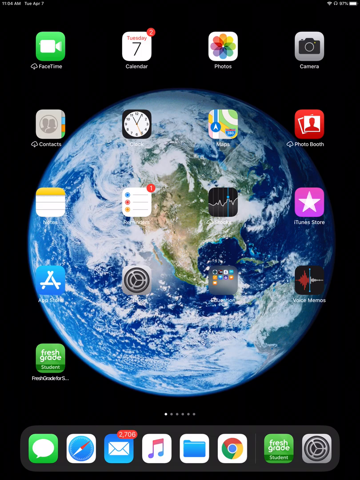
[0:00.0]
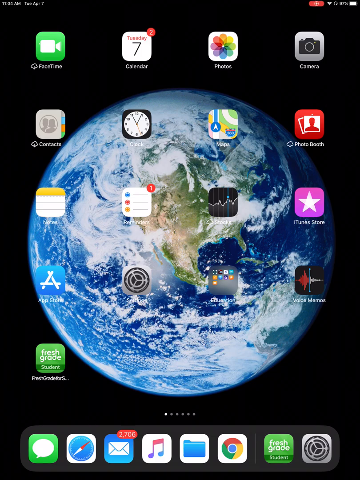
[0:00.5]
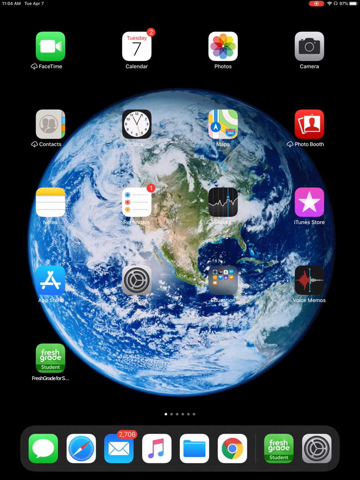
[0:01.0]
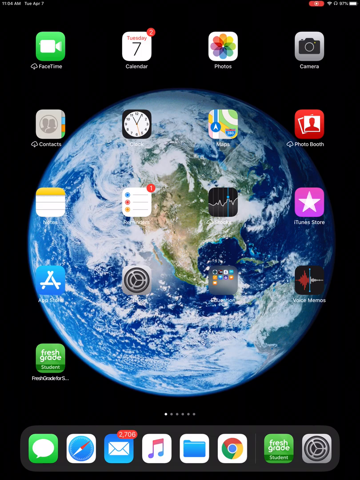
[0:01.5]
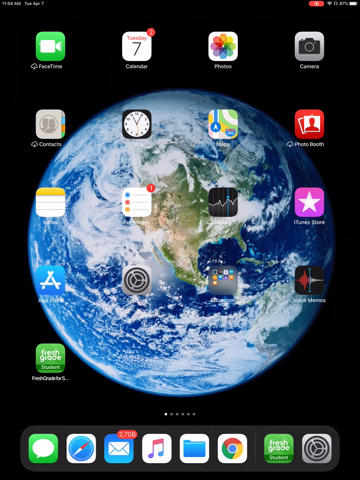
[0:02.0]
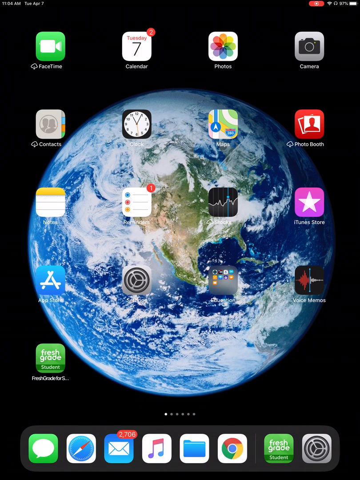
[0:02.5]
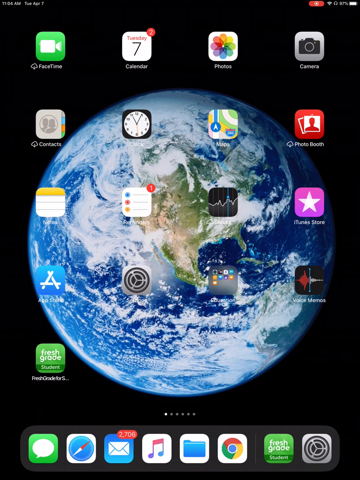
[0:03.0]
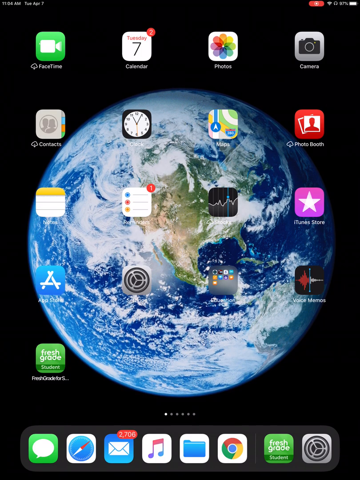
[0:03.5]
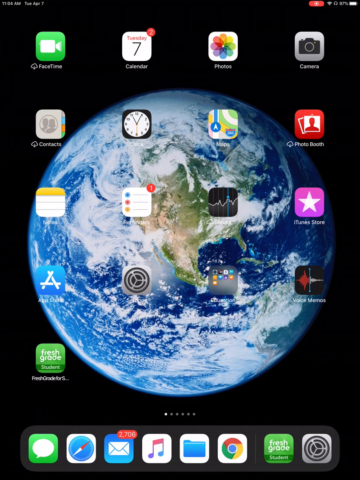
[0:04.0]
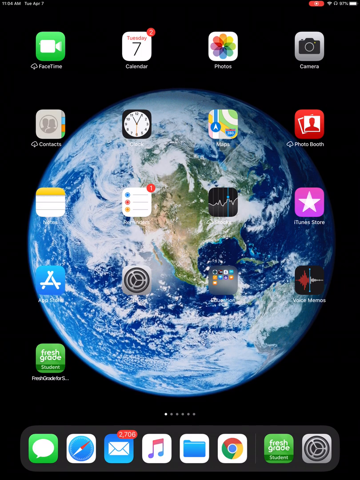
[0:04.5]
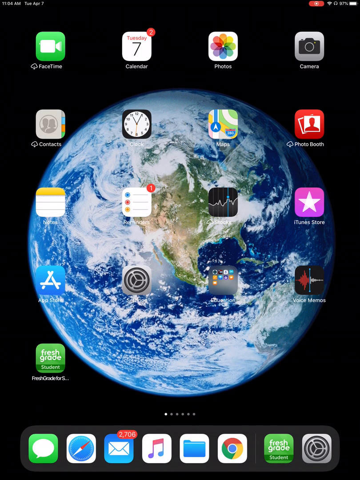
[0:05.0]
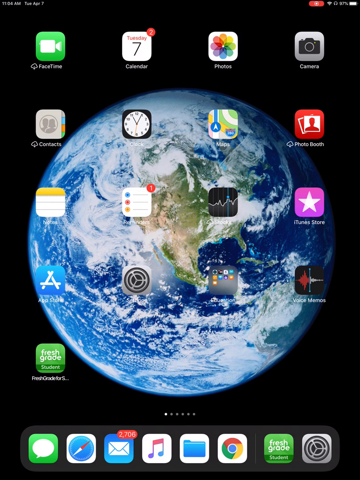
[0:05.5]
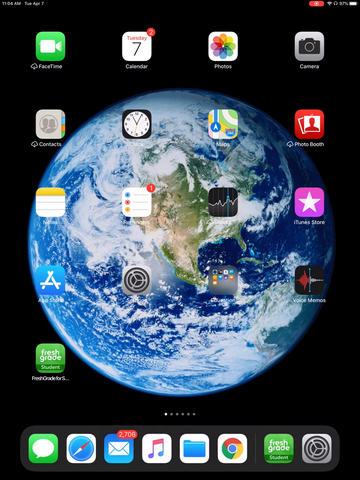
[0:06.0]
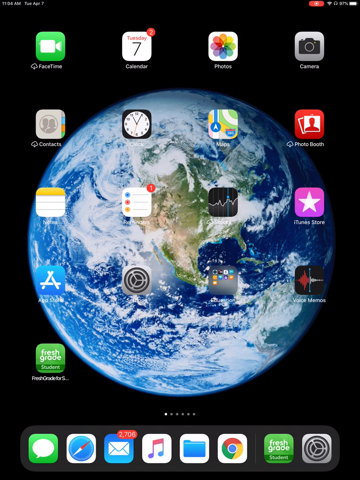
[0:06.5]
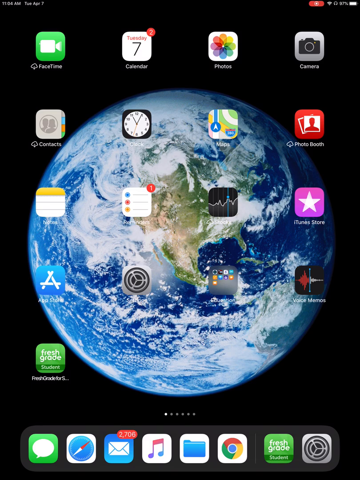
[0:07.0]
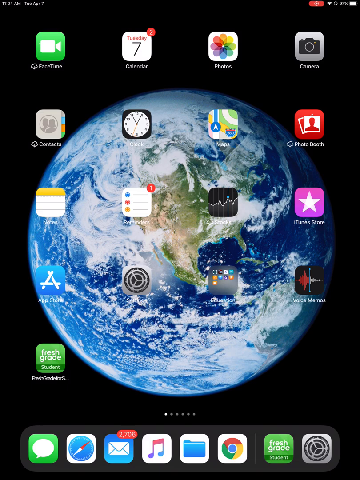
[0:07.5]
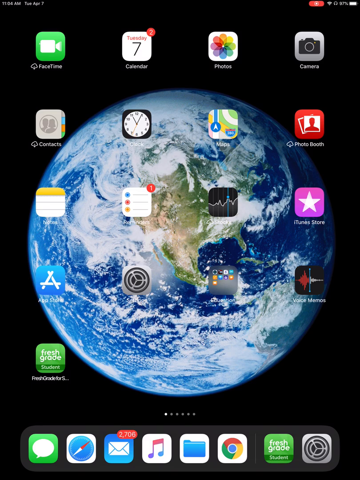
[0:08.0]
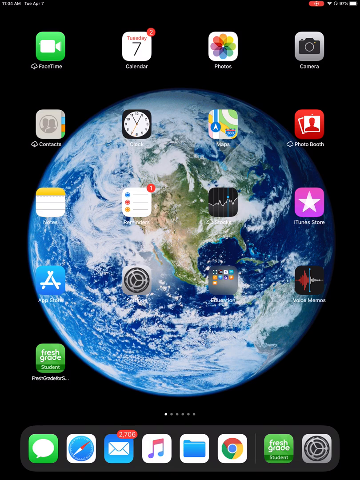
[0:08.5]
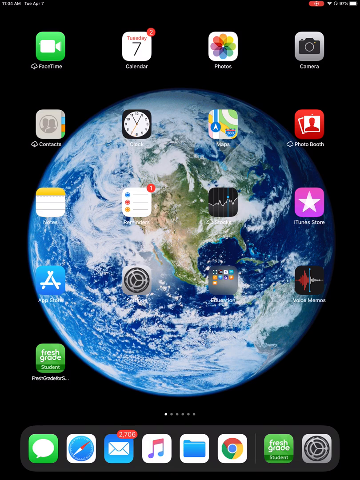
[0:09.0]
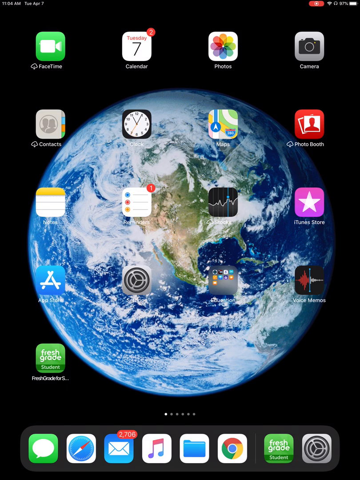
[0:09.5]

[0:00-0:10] The home screen of an iPad is shown, with a background of the earth in the middle of the screen against black. Eight icons are on the bottom bar: the text messaging app, Safari, the mail app, Apple Music, folders, Google Chrome, FreshGrade, and the Settings app. Seventeen applications fill the home screen in front of the globe background, and one of them is a folder containing nine apps. The iPad has six pages, and the first page is currently displayed. The video stays on this exact page for the whole shot.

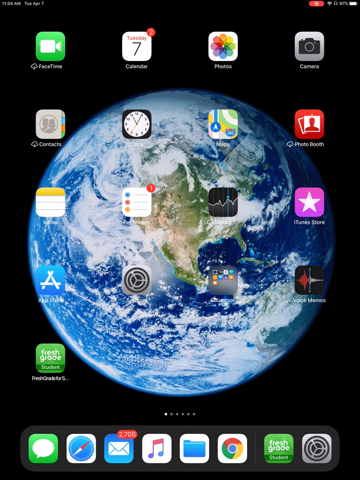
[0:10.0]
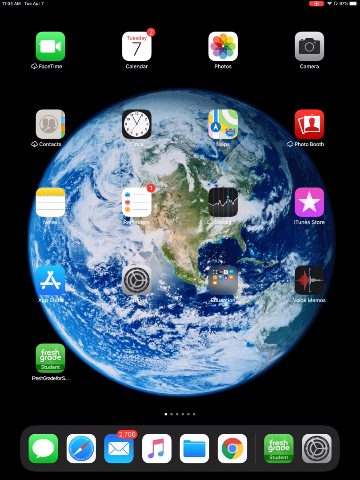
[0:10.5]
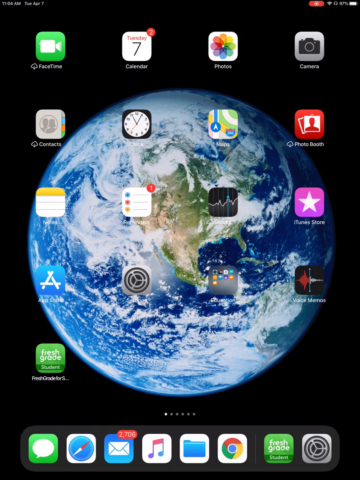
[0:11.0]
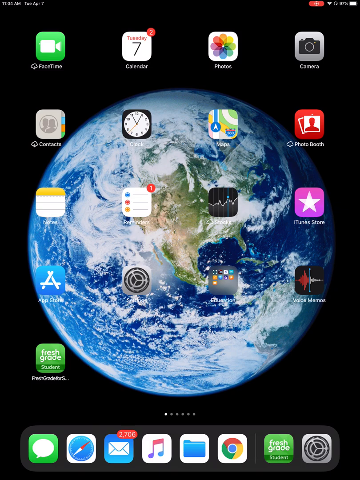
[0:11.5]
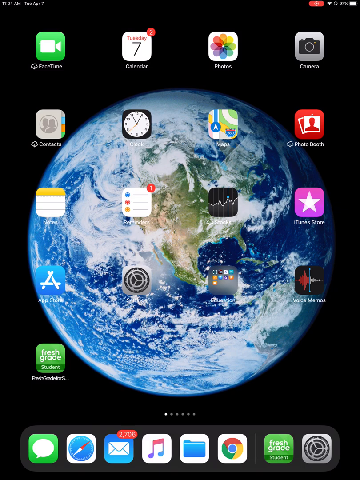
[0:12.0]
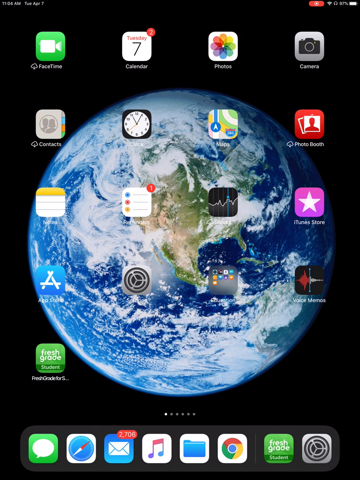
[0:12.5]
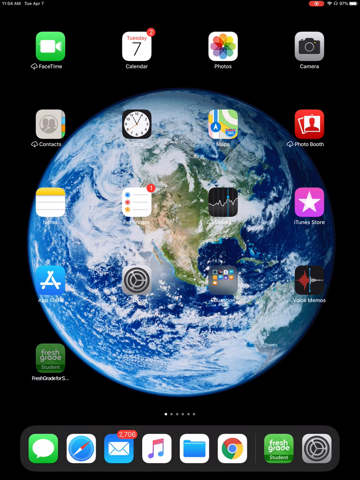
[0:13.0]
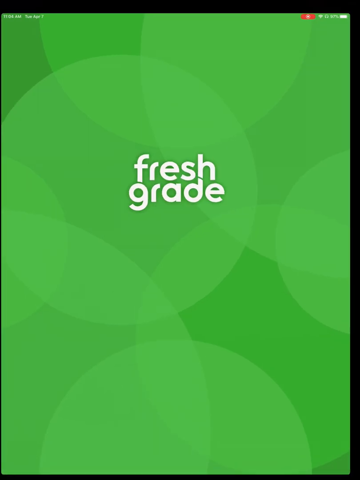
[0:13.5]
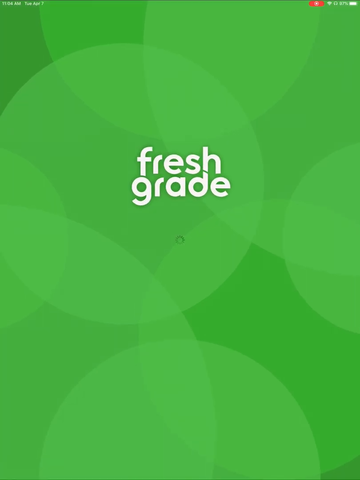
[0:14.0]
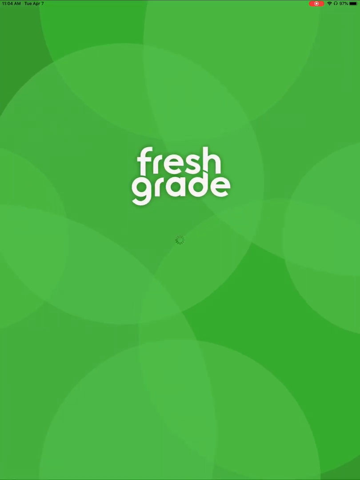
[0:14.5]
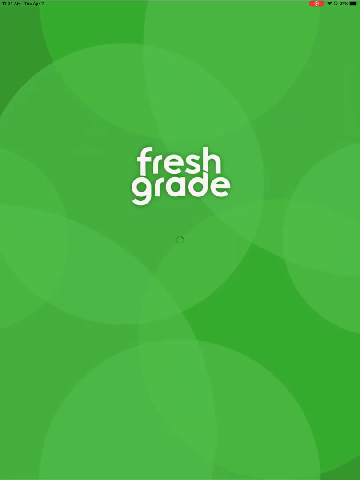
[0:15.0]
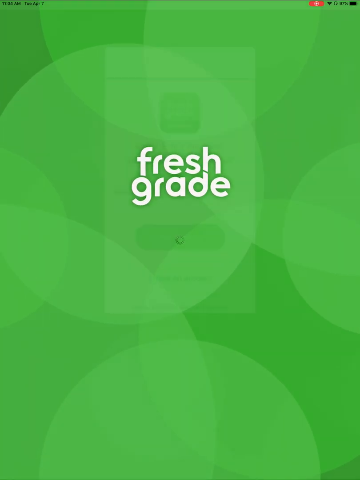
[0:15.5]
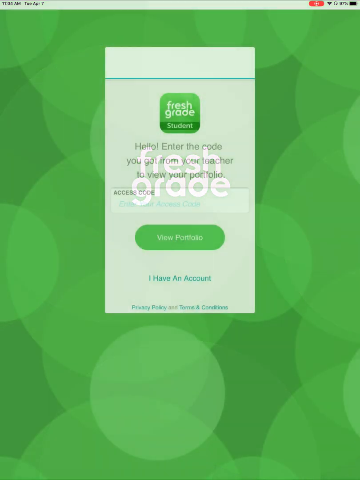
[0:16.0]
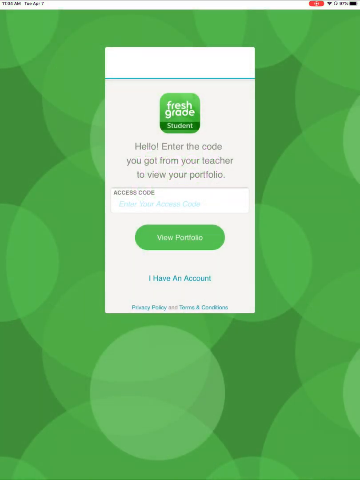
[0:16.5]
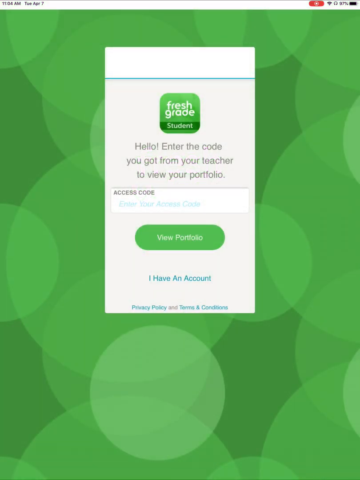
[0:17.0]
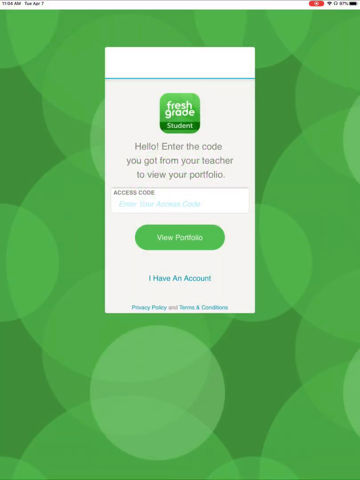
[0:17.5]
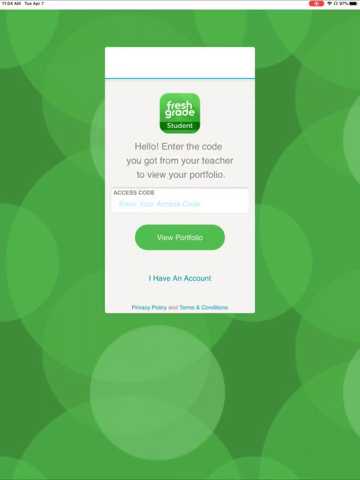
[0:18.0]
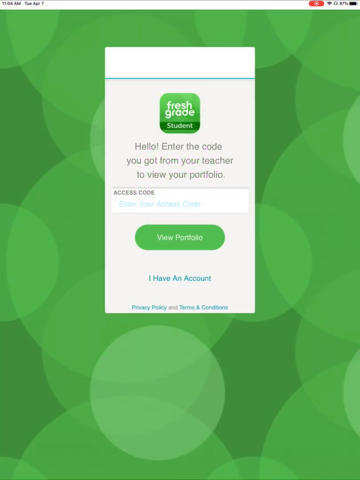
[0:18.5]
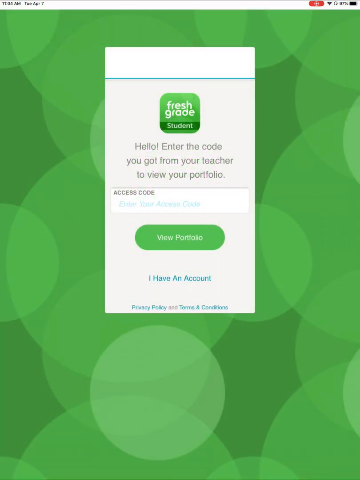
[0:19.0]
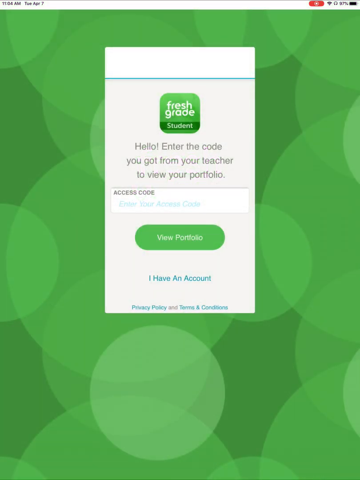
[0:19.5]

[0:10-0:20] The same home screen is shown until the FreshGrade app is opened. As the app loads, the background is green with circles in different shades of green behind the FreshGrade logo in the center. A small loading icon appears before a prompt pops up in front of the screen that says "hello enter the code you got from the" and "be sure to view your portfolio", with an area to add an access code and a button below that says "view portfolio". There is also an option that says "I have an account" and a privacy policy below.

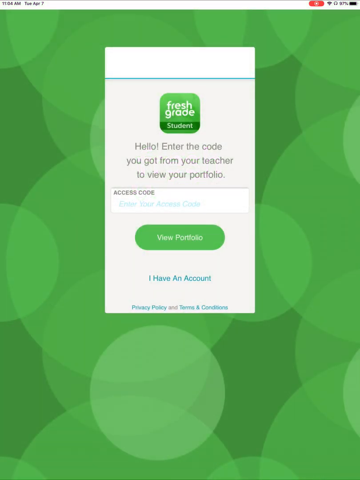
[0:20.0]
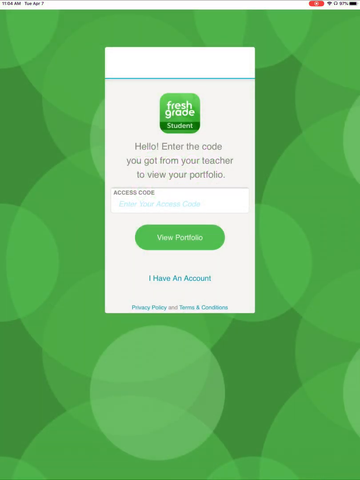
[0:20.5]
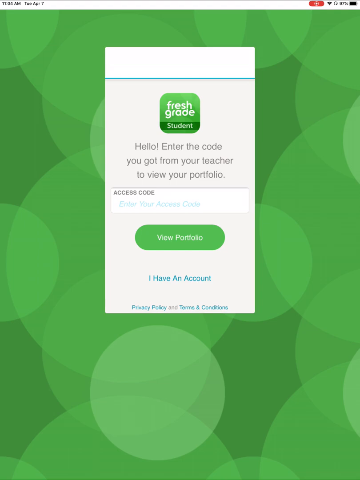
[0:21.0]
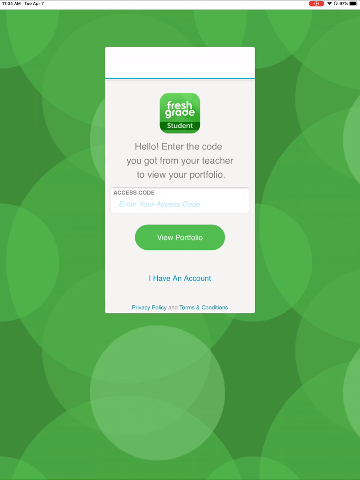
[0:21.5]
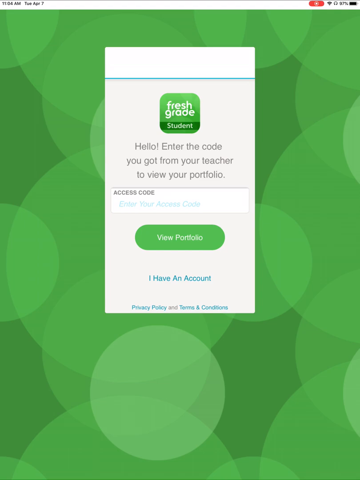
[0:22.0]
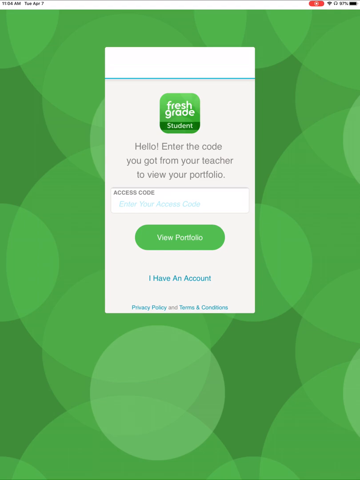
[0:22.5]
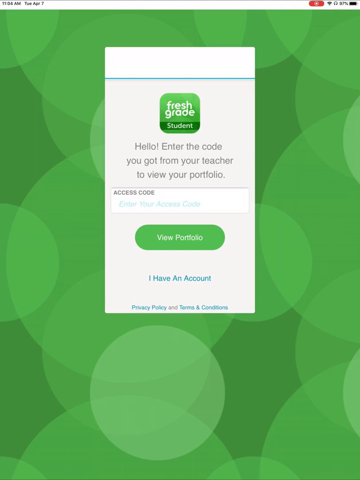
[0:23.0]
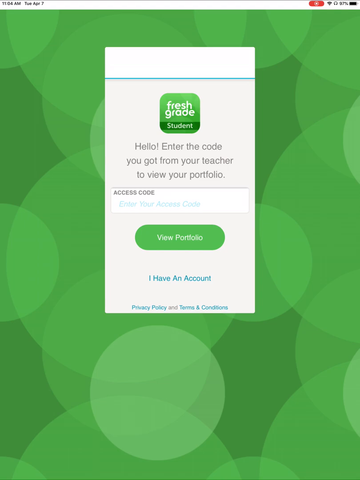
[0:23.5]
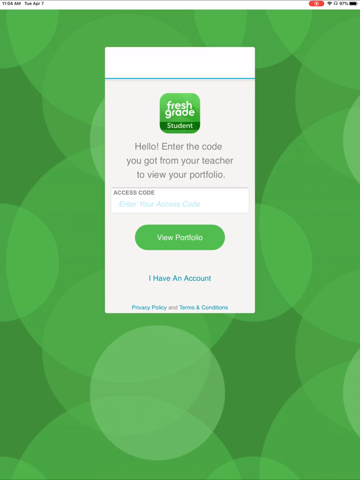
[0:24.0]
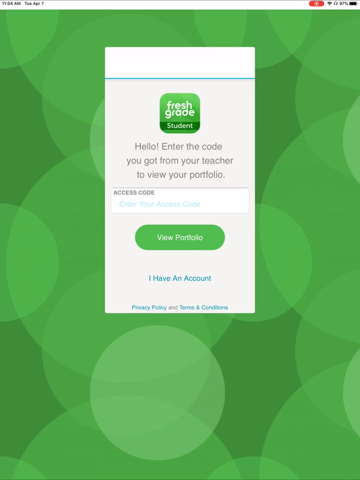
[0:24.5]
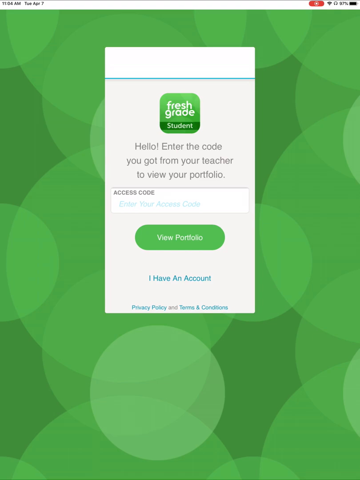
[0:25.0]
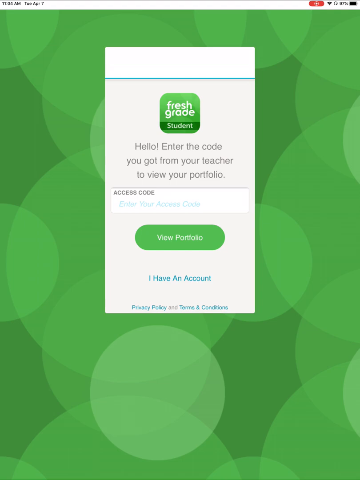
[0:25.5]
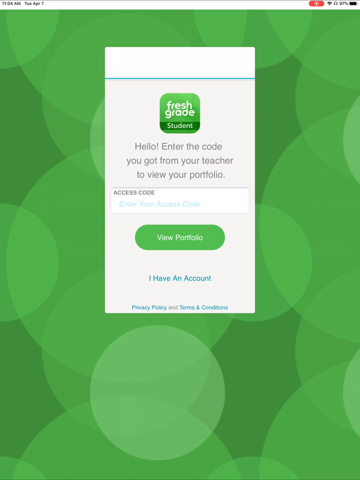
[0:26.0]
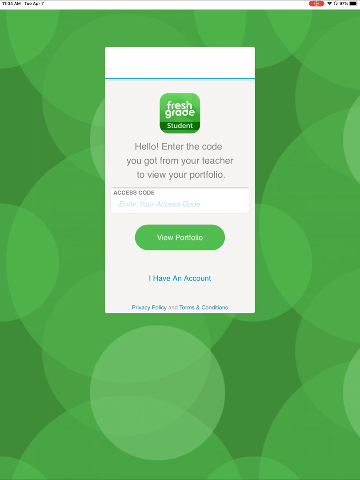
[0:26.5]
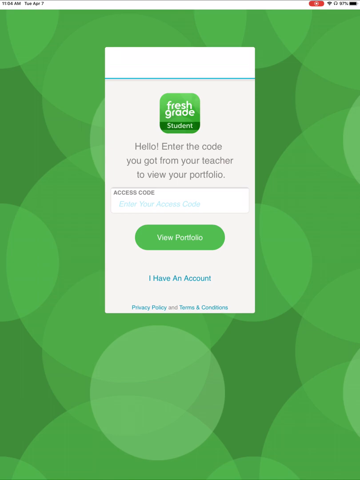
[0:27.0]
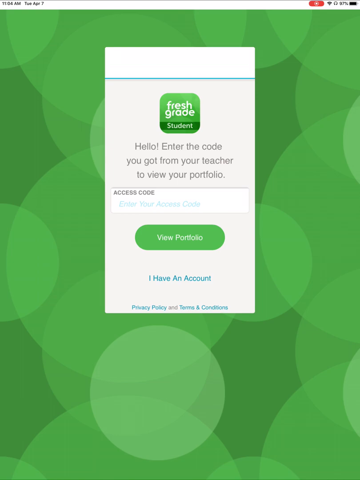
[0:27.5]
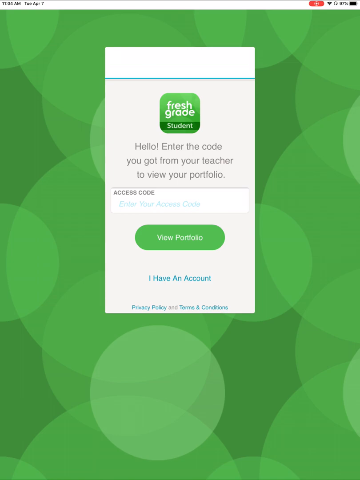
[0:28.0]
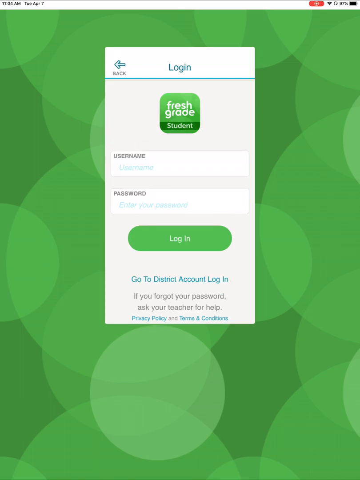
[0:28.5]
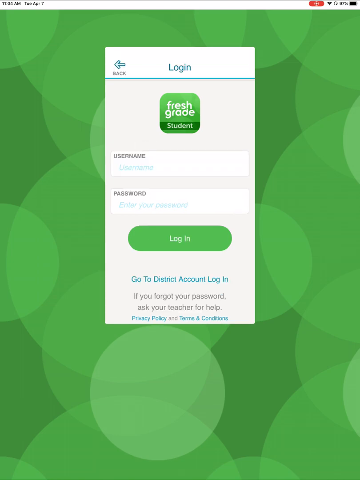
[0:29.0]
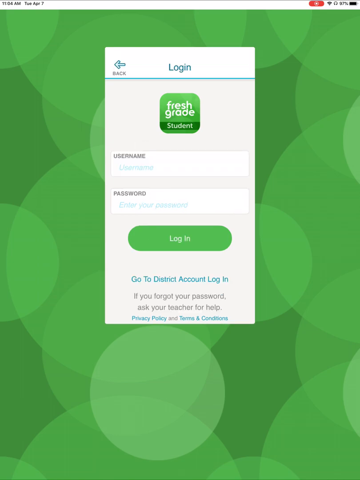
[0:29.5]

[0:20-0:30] The page for entering an access code to view a portfolio in FreshGrade is still shown. The user clicks the "I have an account" button below the view portfolio button, which opens a login page. The login page has username and password areas and a green login button. Below the green login button is a "go to direct account login" option, and below that a forgot password button. At the top of the prompt, a blue outlined arrow back button is beside the login heading. The green background with green shaded circles is still visible behind the prompt. The screen remains here until the end of the shot.